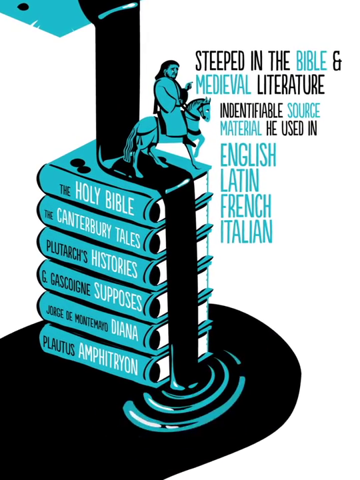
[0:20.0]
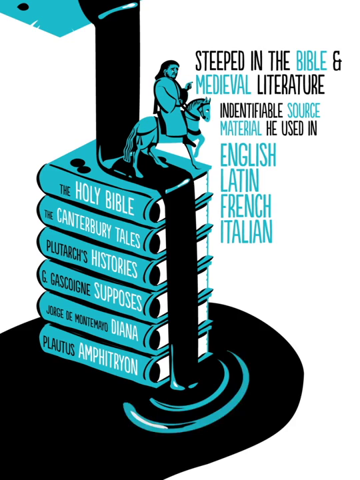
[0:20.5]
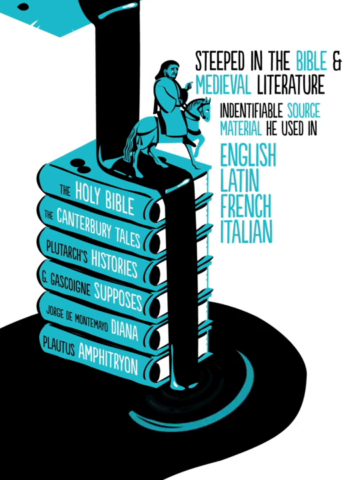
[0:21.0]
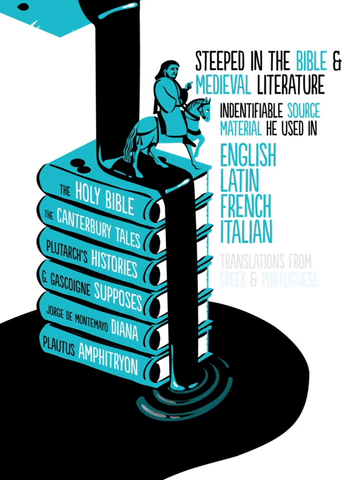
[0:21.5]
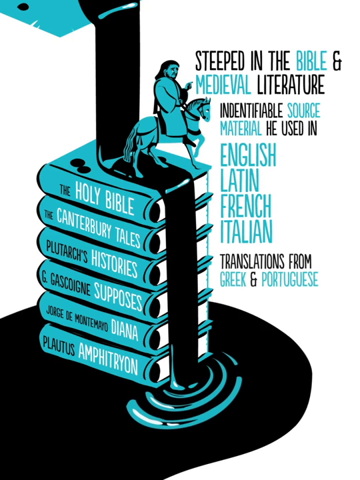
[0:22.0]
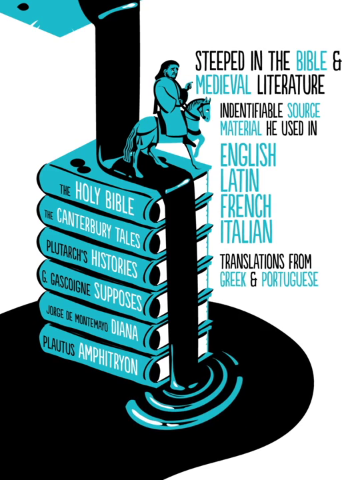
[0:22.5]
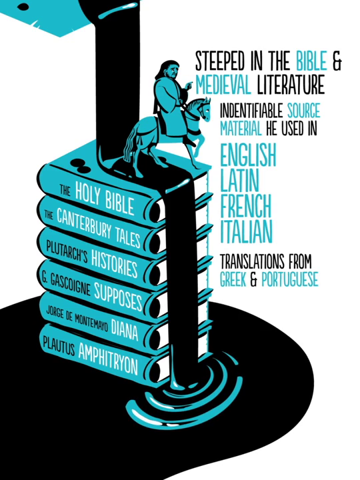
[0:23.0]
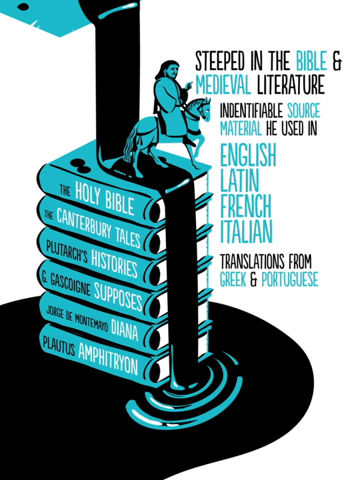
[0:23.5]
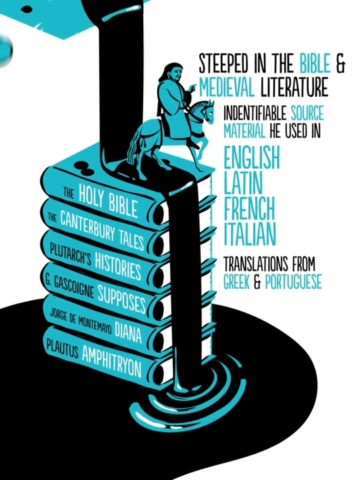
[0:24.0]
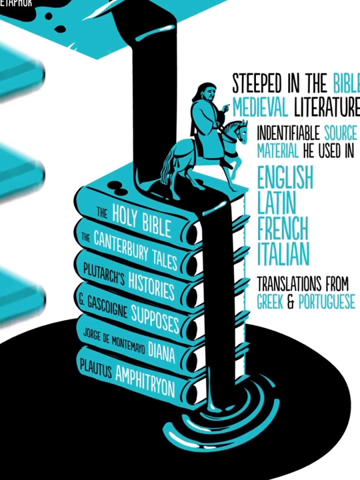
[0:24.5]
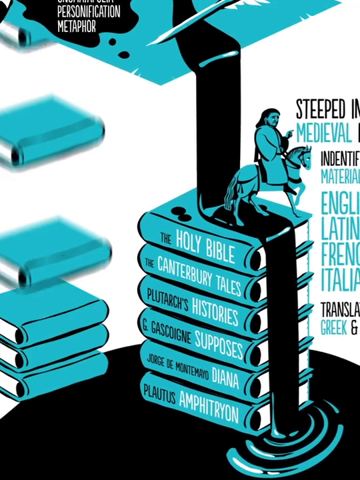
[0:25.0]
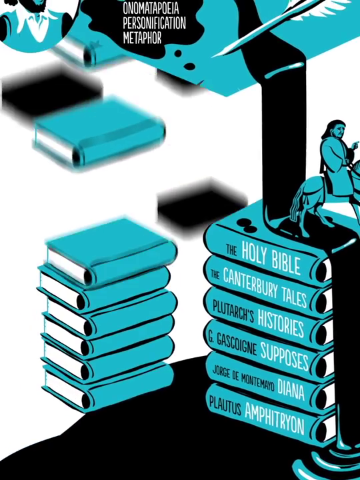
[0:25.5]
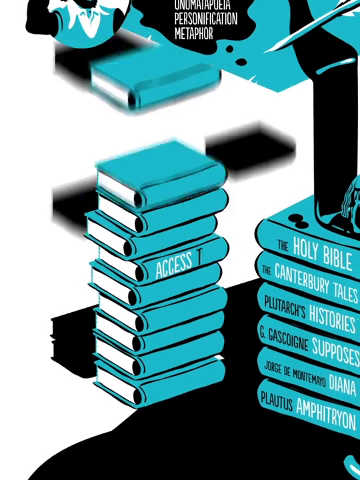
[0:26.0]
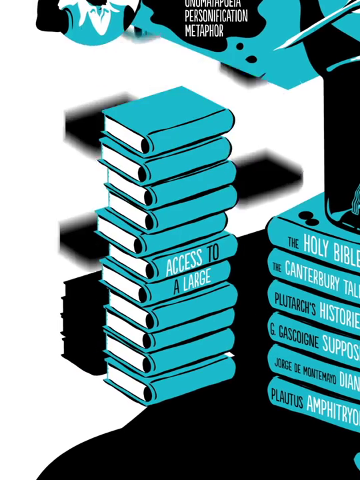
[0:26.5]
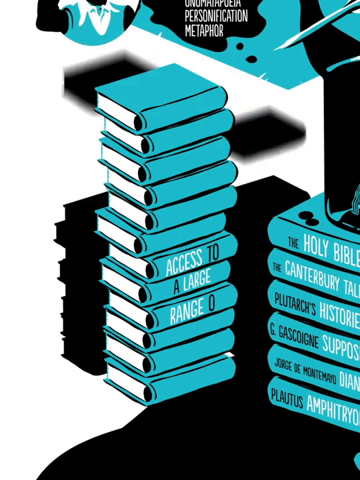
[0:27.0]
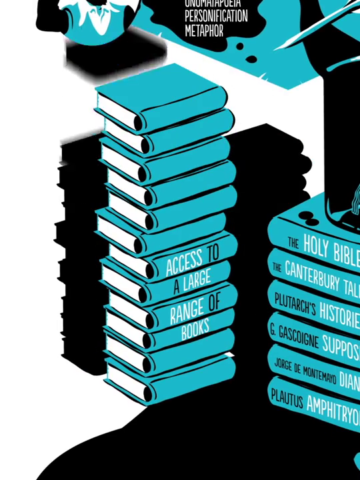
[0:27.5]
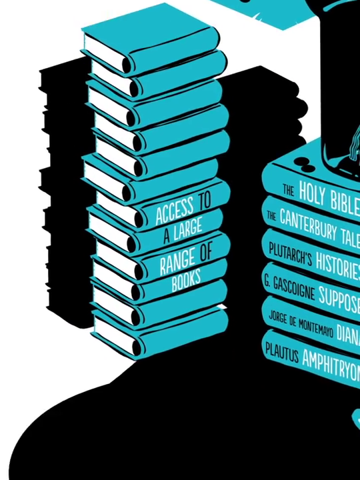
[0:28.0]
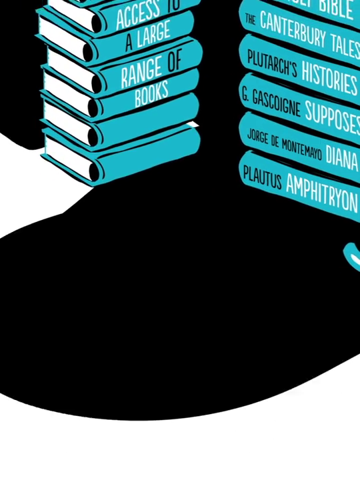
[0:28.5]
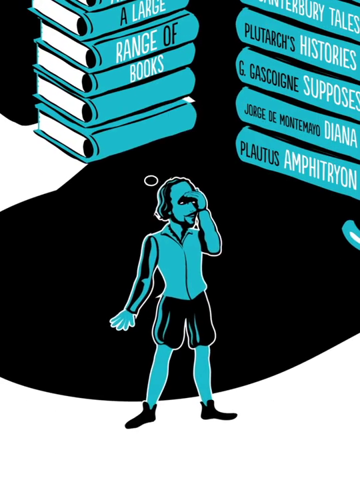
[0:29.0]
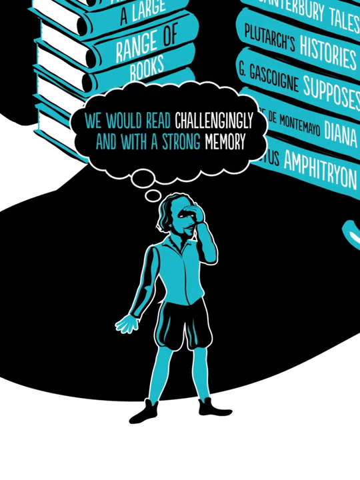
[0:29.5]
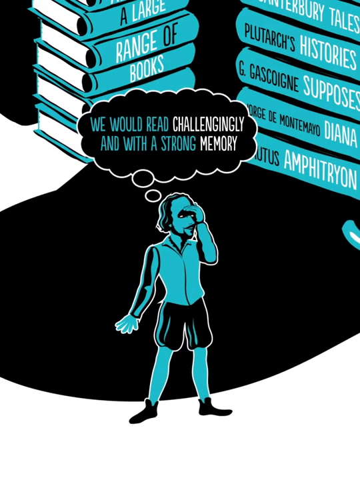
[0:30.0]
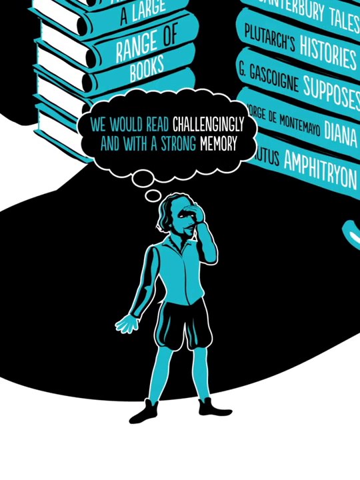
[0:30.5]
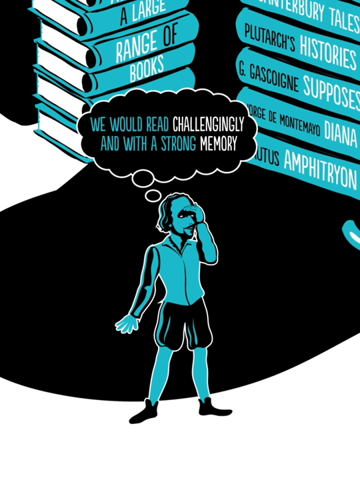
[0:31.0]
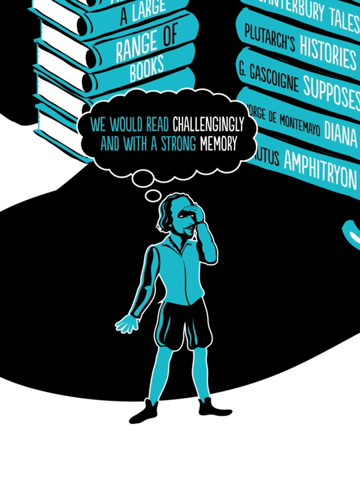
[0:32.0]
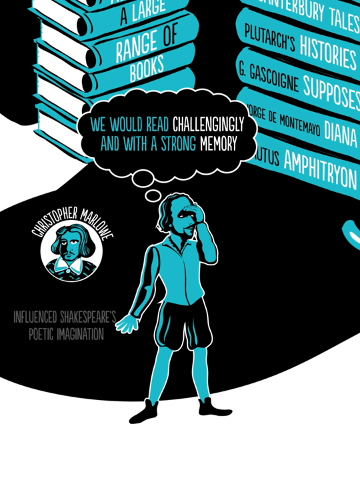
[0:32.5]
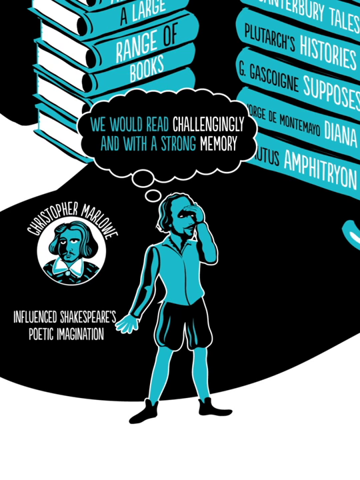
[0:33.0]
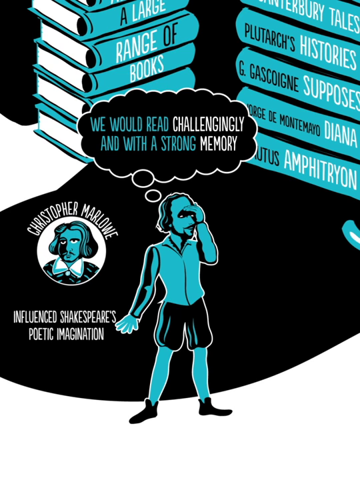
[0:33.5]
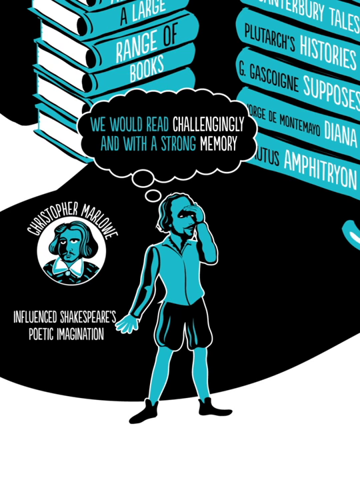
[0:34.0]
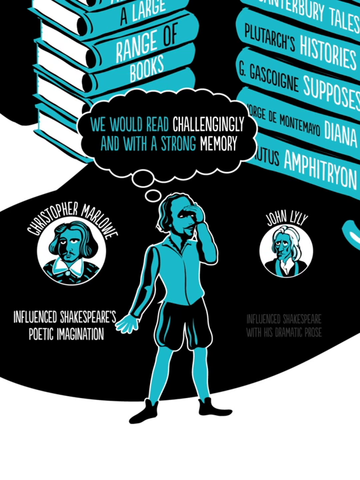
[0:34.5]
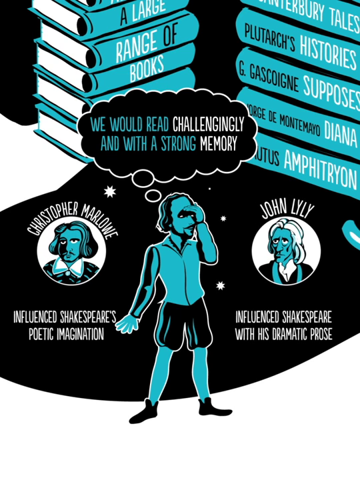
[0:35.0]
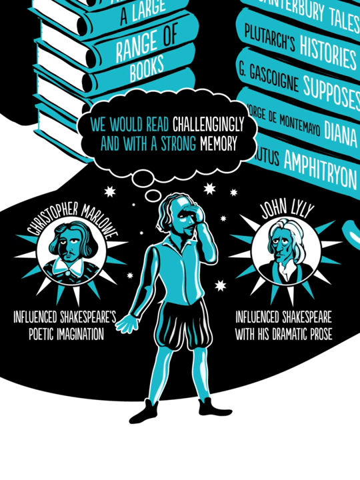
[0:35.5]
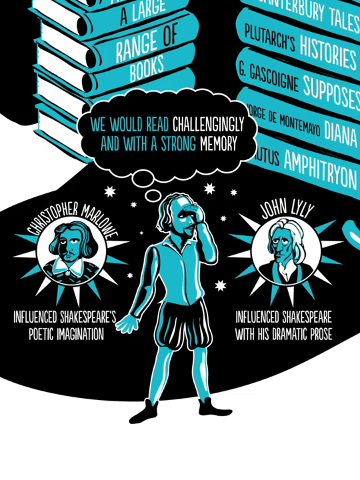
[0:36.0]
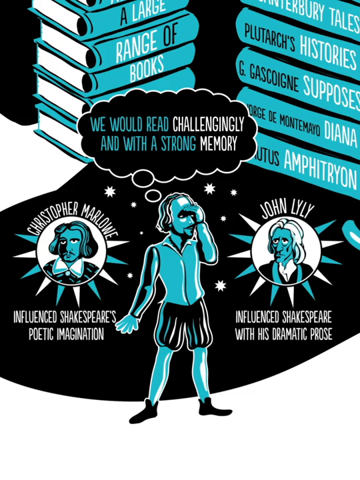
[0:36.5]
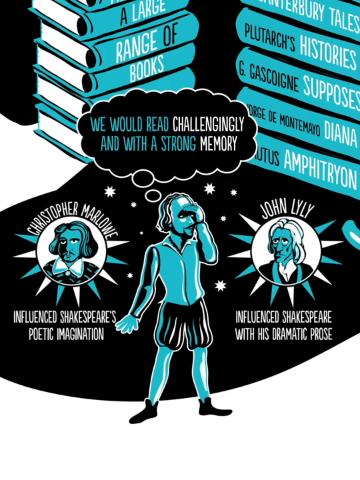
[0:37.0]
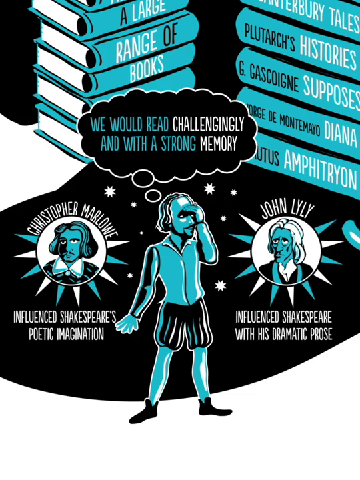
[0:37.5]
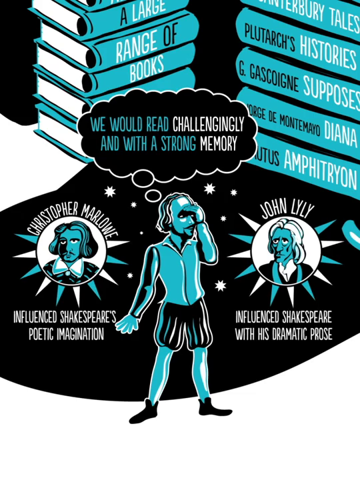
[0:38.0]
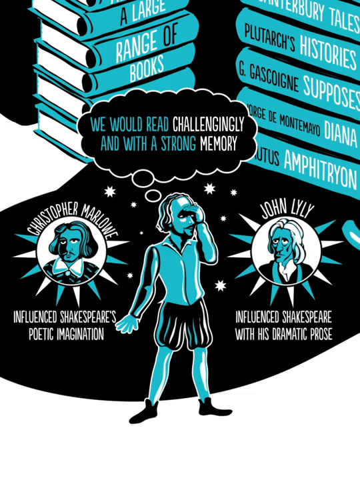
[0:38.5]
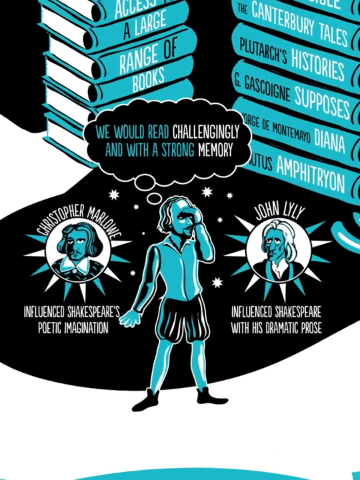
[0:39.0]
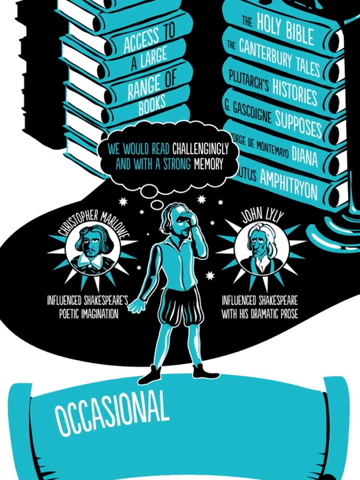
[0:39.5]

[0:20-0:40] A stream of black ink comes from the top of the screen on the left-hand side and runs onto a stack of six books. All of the books are blue, with writing in both black and blue, and there is writing on the right-hand side. At the bottom of the screen, the ink puddles beneath and around the books, with an animation of ripples moving out from where the ink pours into the puddle. The view then moves slowly to the left. On the left-hand side of the stacked books, books begin to stack up one at a time, ultimately reaching 12 blue books. Once there are about 8 books, black shadow books begin to stack up in two columns behind the blue books. The view slowly pans to the right and shows a cartoon image of Shakespeare standing in front of the puddle. The image is stationary, and the man has his left hand covering his eyes. Overhead is a thought bubble reading "We would read challengingly and with a strong memory."